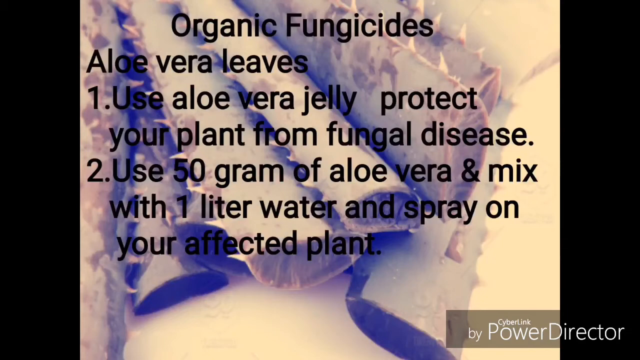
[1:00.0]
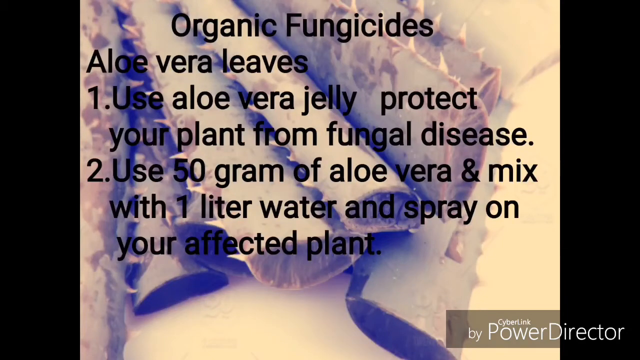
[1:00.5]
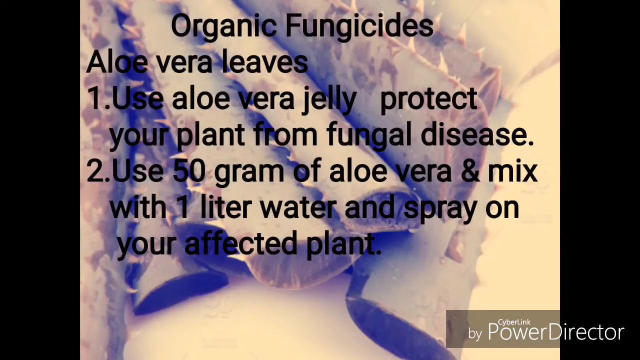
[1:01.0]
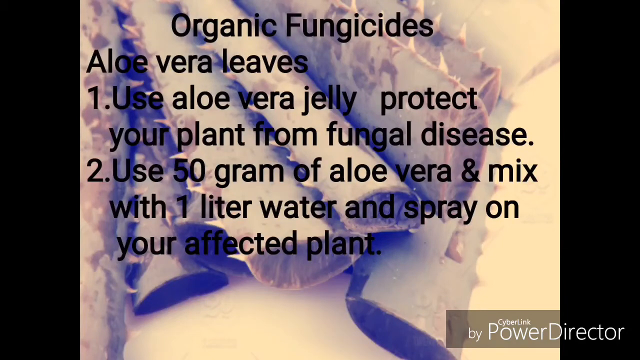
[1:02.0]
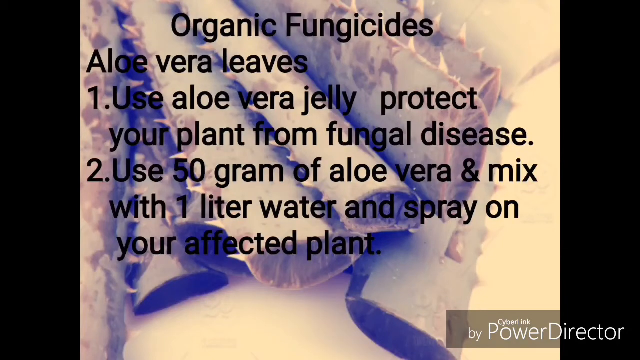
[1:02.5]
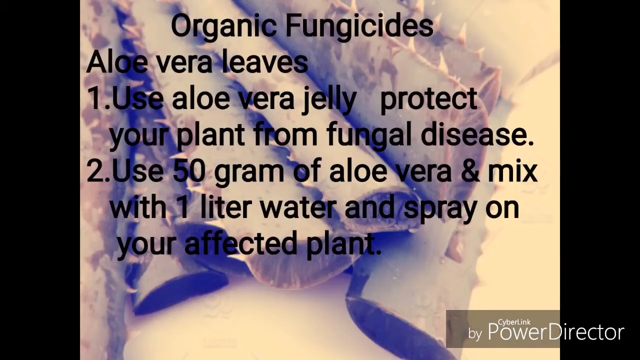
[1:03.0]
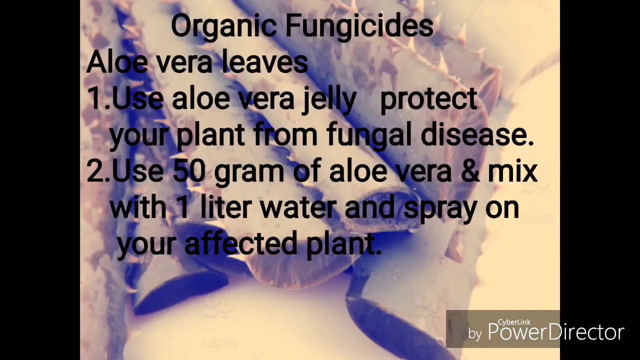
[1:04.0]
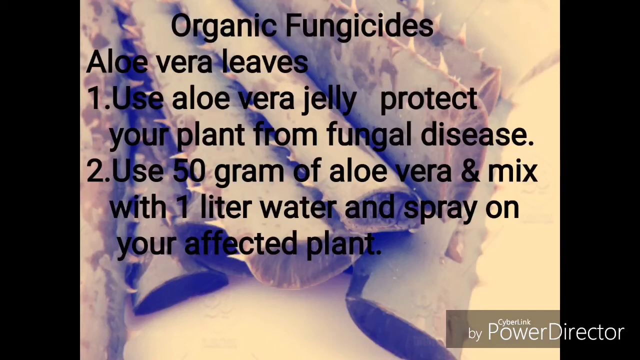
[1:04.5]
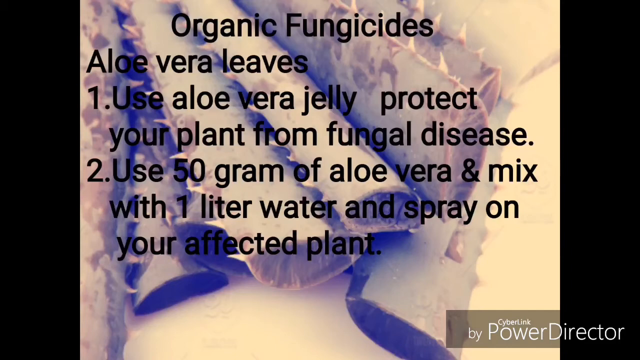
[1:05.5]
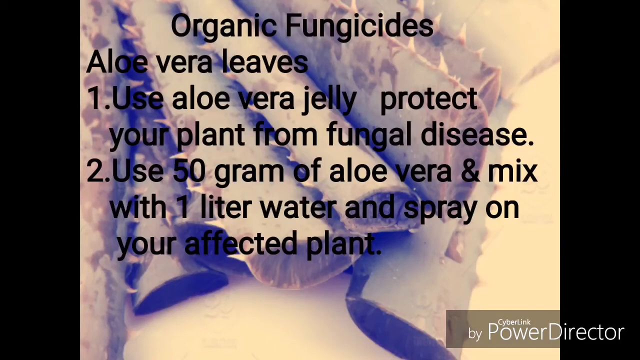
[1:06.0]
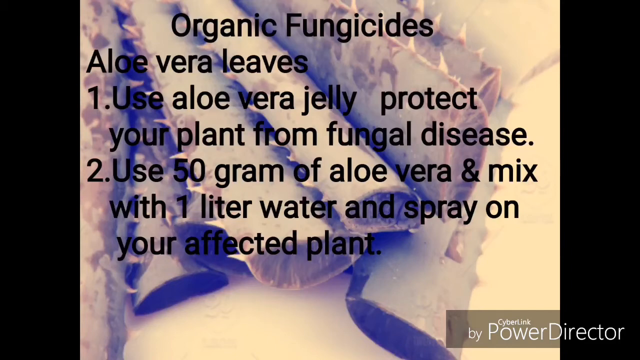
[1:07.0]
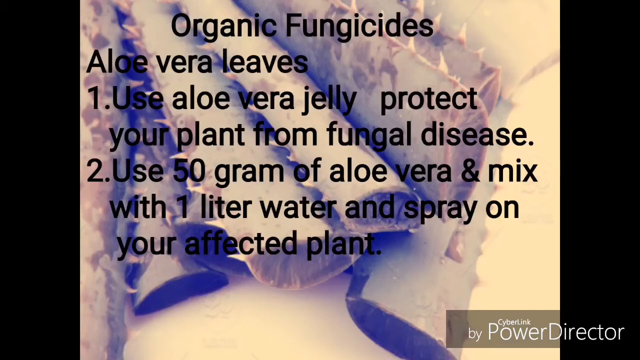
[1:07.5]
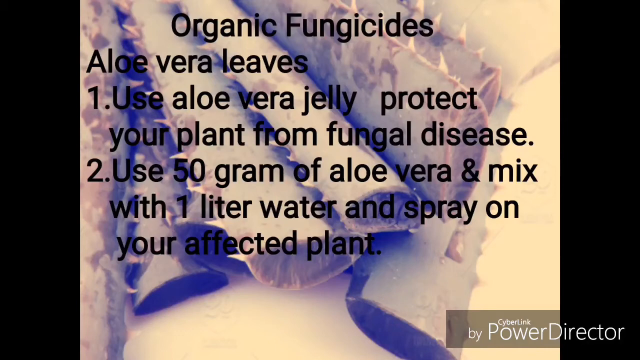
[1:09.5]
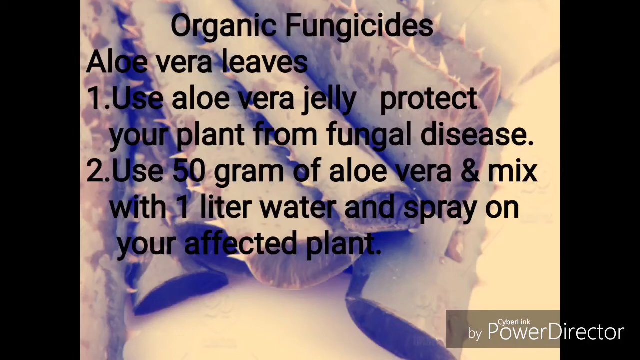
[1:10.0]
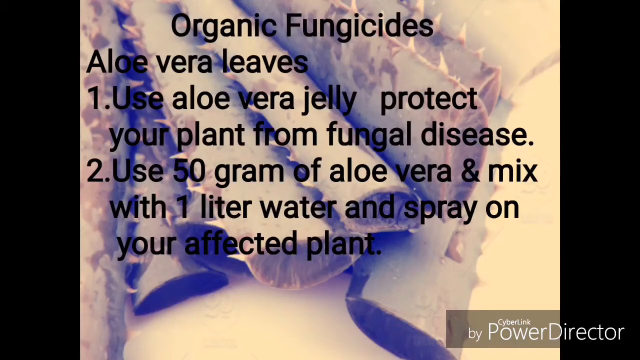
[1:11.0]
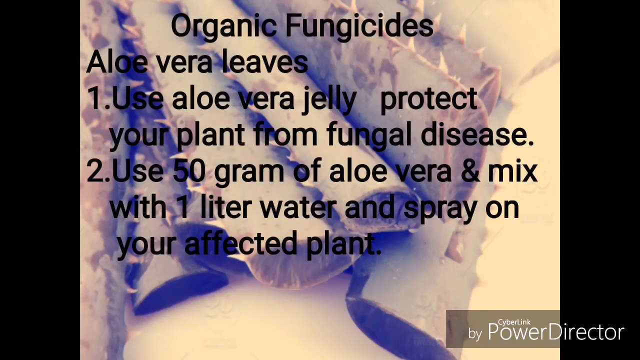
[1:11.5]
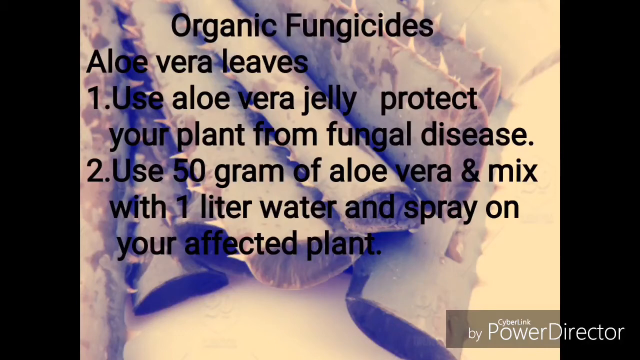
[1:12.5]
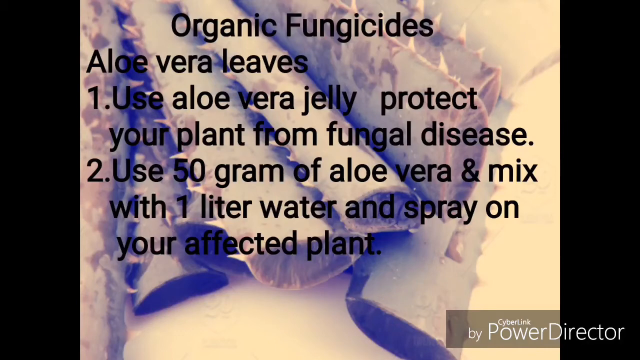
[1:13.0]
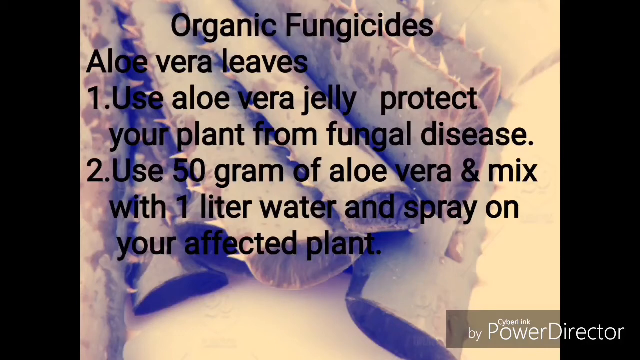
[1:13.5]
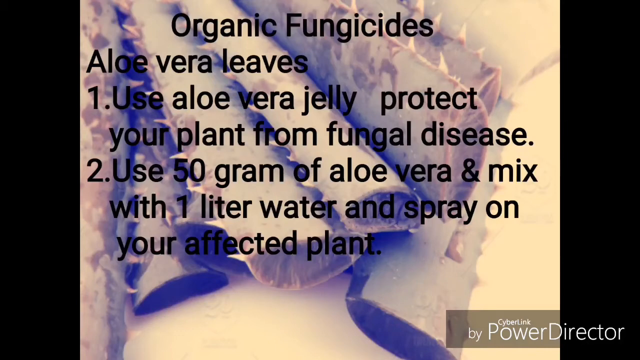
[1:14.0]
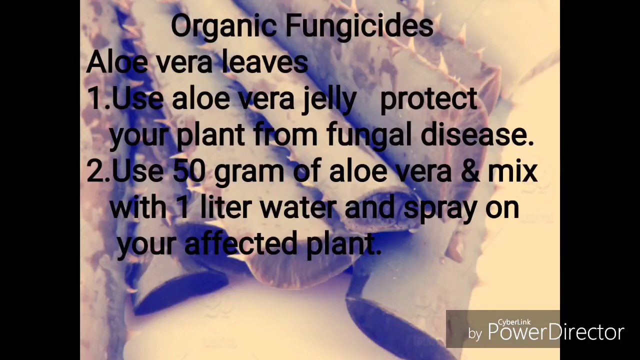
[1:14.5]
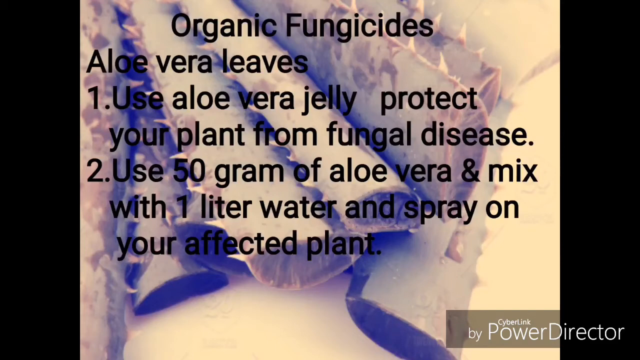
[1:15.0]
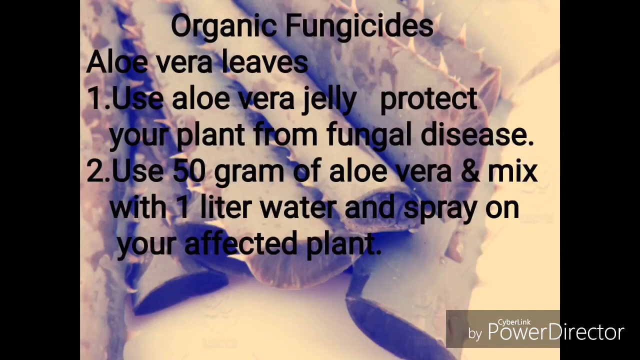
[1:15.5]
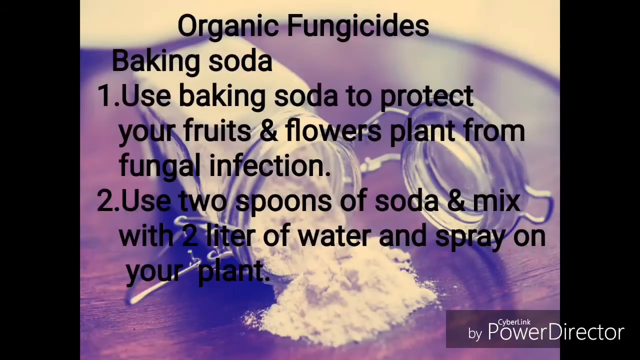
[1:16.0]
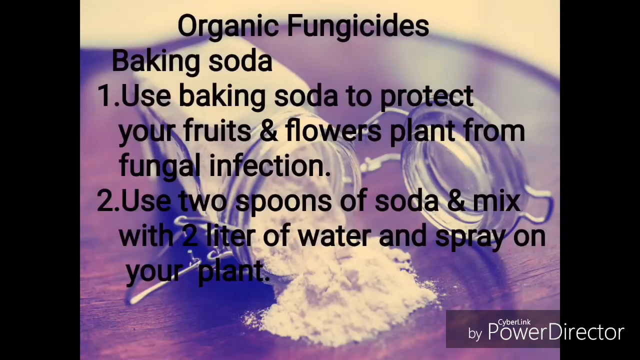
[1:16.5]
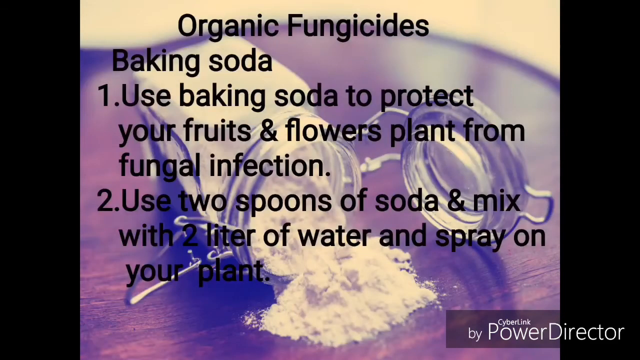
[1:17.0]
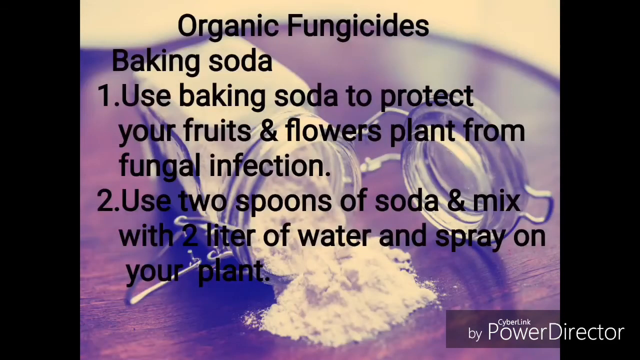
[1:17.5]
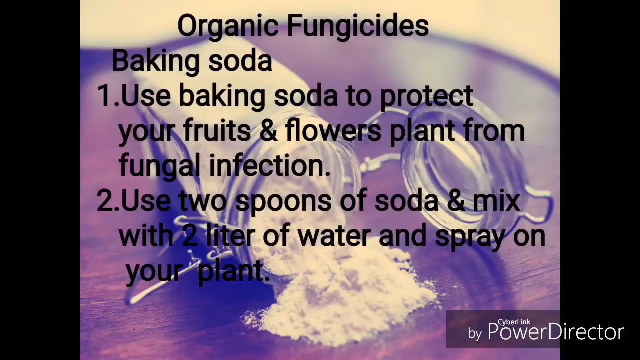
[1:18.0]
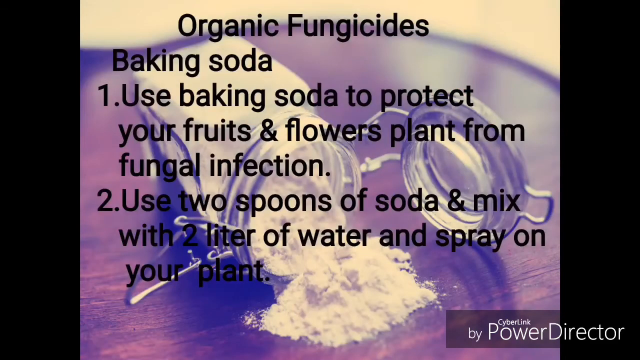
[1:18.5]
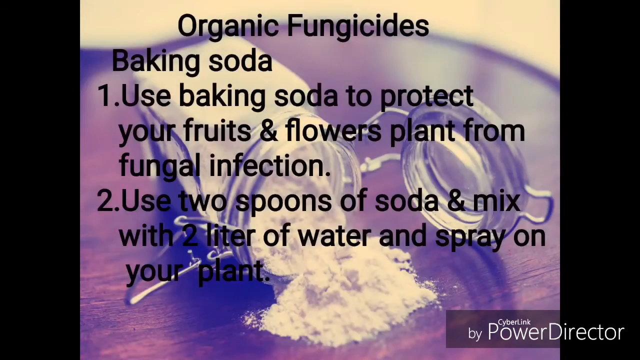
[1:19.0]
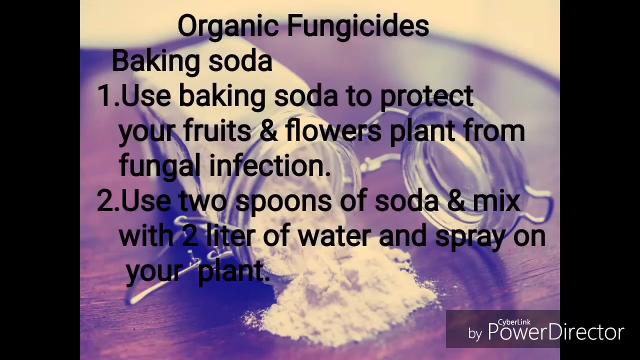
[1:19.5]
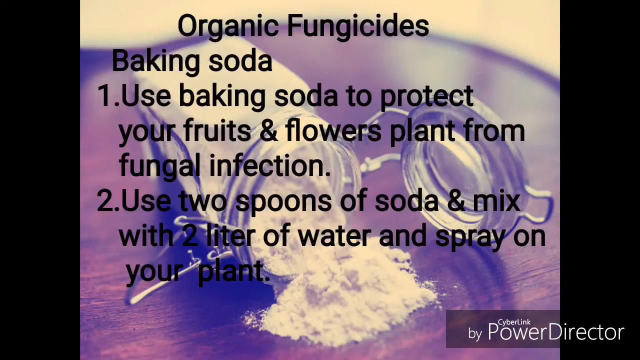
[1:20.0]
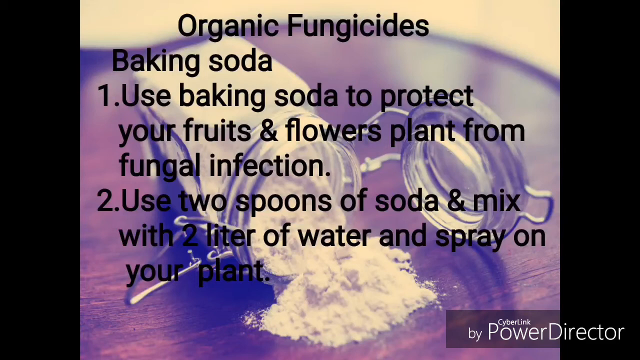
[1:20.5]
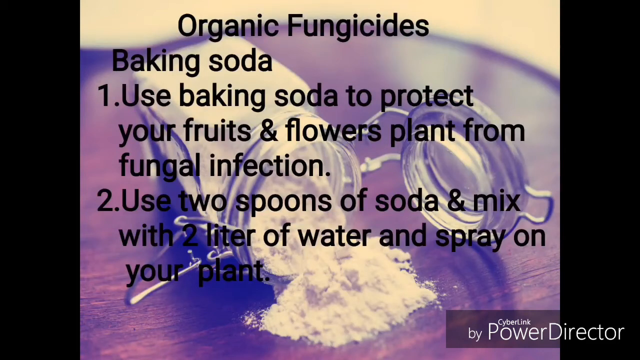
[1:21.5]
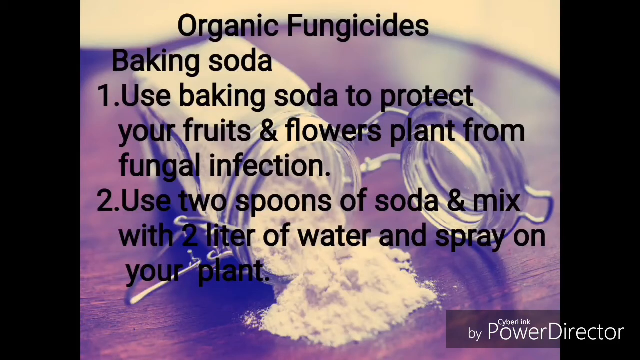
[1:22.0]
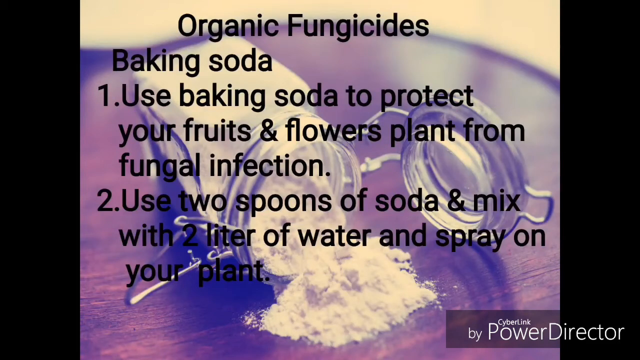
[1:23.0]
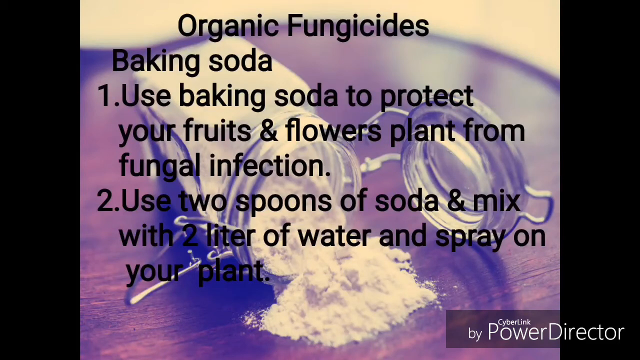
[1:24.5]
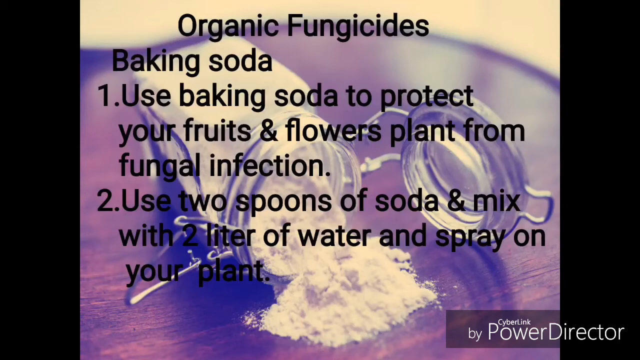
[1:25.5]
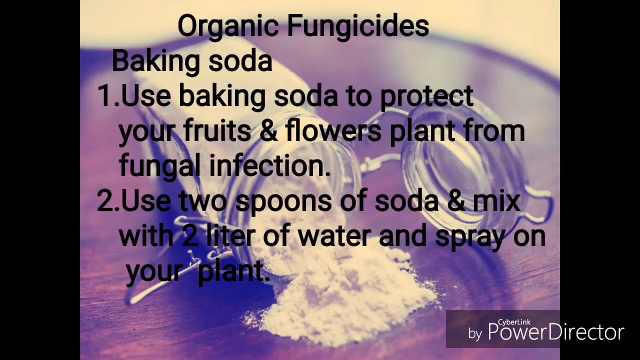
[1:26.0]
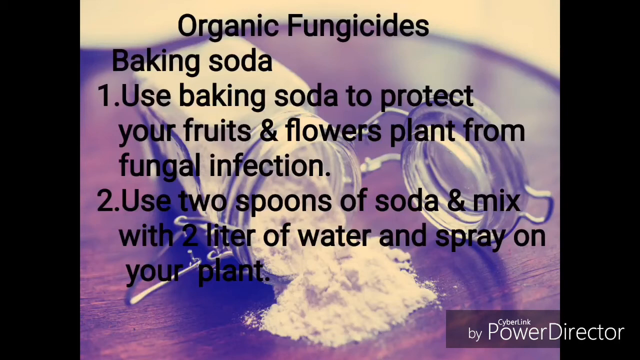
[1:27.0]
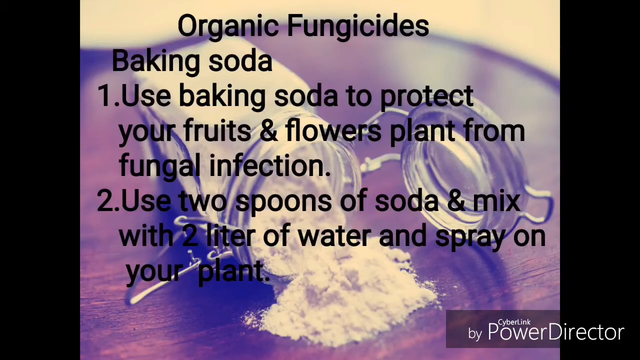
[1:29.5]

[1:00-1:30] The same image stays on screen for 17 seconds. The background then changes to the glass jar with its lid open and the powder, baking soda, falling out. Text at the top centre reads "organic fungicides", and to the left the text reads "baking soda", followed by two points on the left of the screen: "use baking soda to protect your fruits and flowers plants from fungal infection" and "use two spoons of soda and mix with two liter of water and spray on your plants". This image stays on screen, and in the bottom right corner "Cyberlink by PowerDirector" appears in a faint black background box.